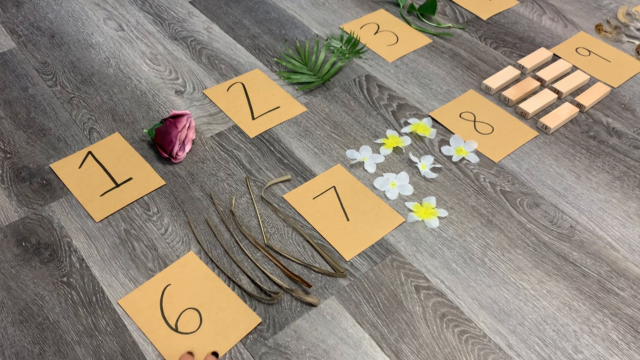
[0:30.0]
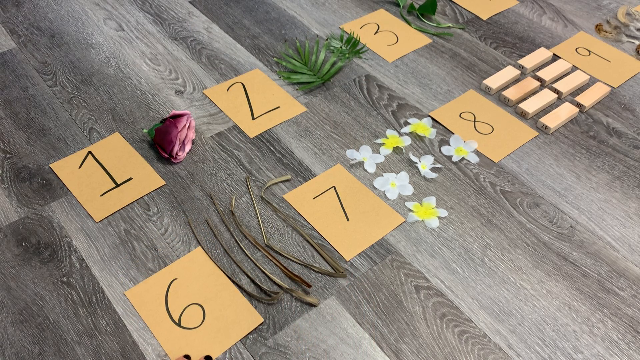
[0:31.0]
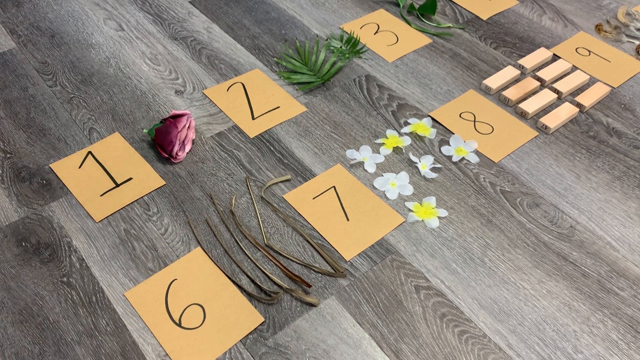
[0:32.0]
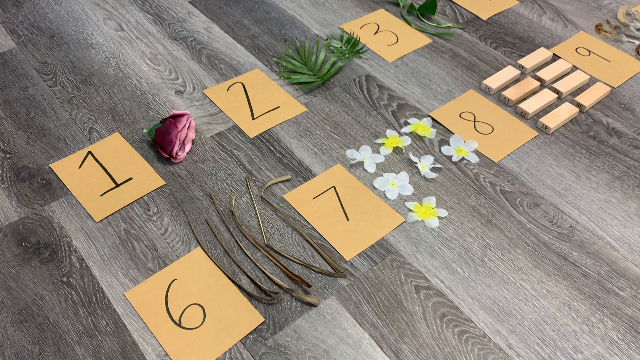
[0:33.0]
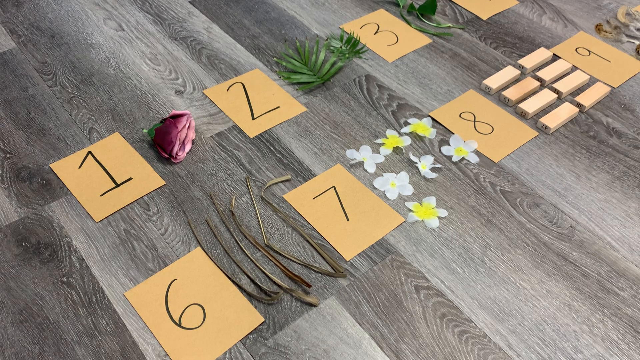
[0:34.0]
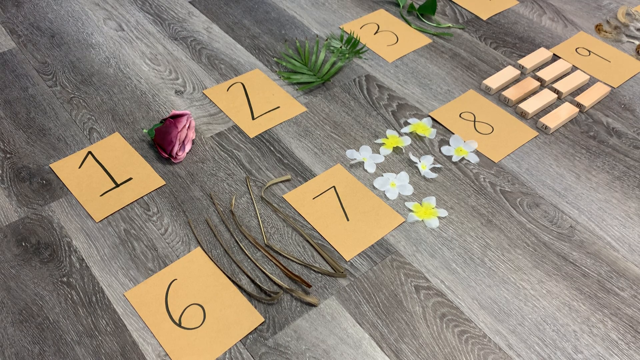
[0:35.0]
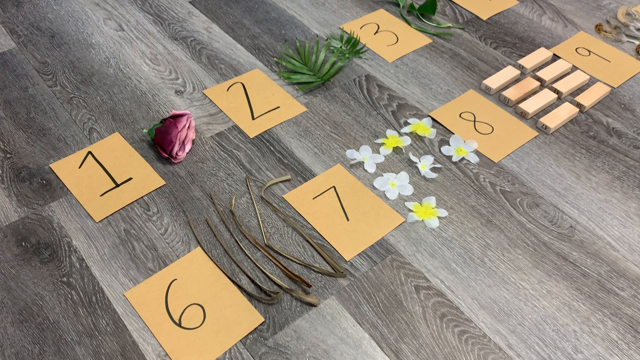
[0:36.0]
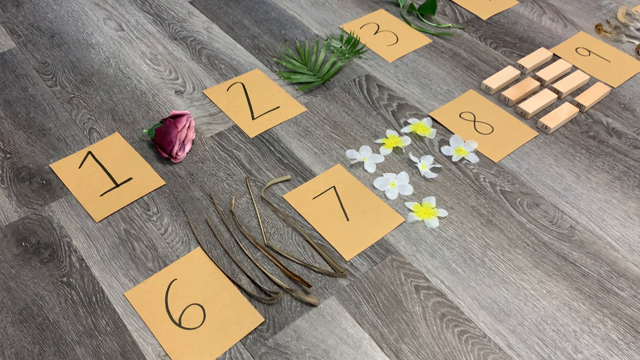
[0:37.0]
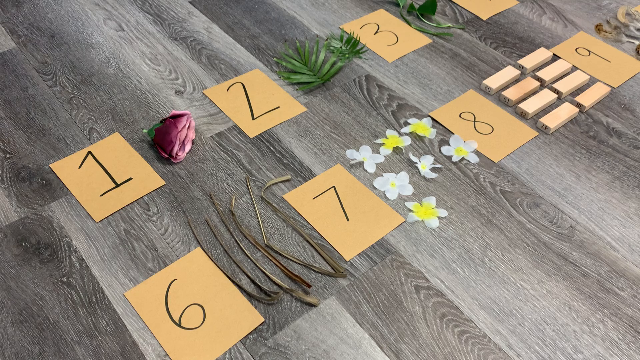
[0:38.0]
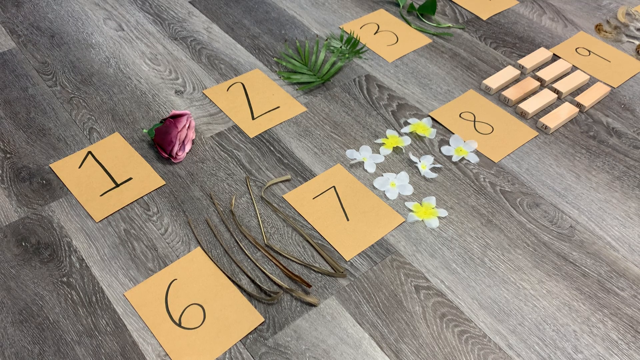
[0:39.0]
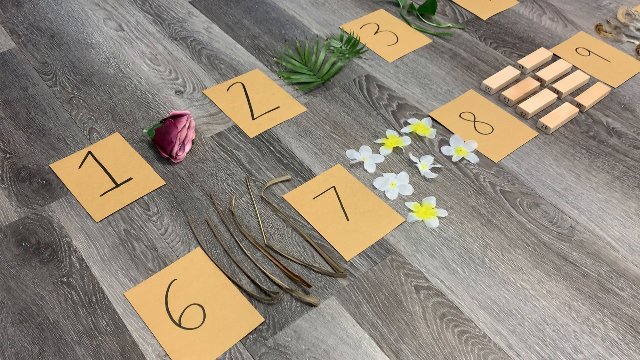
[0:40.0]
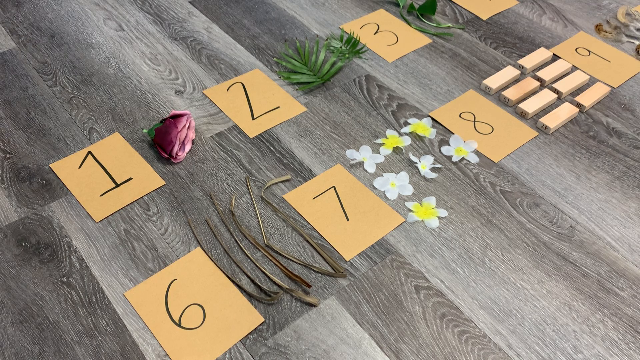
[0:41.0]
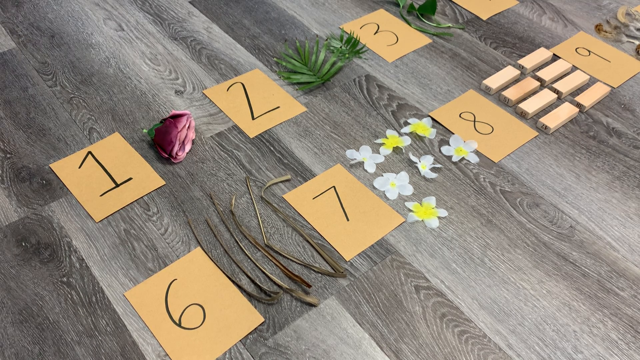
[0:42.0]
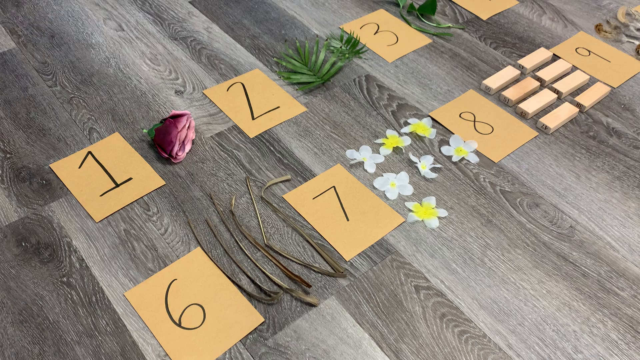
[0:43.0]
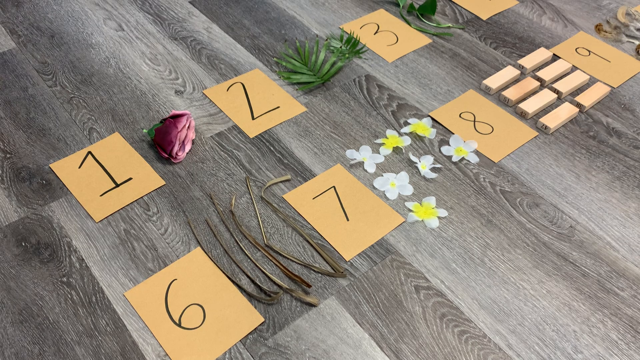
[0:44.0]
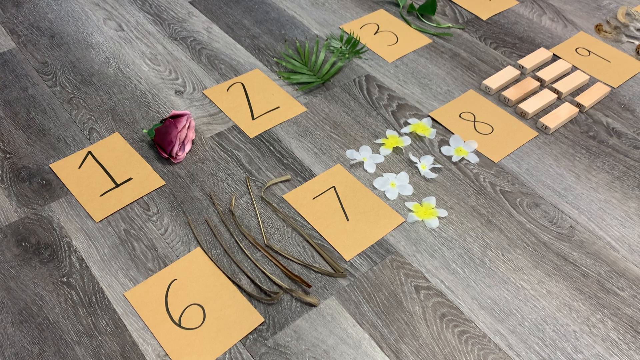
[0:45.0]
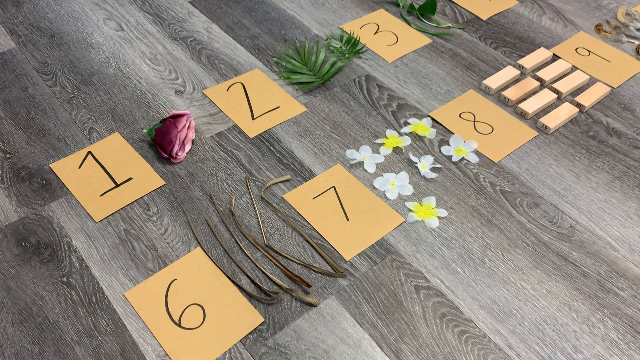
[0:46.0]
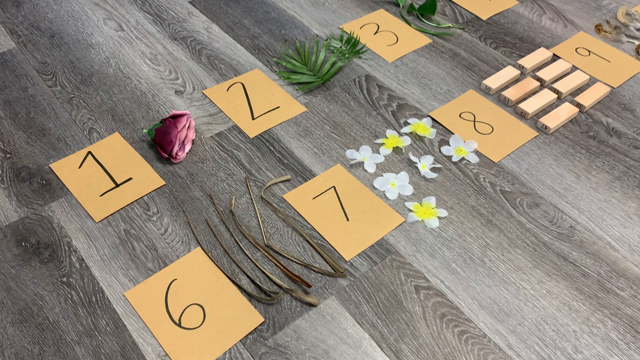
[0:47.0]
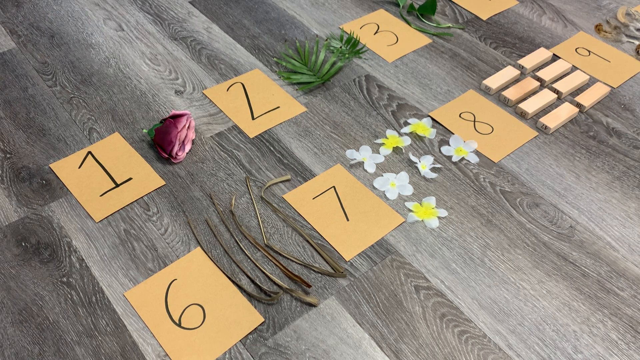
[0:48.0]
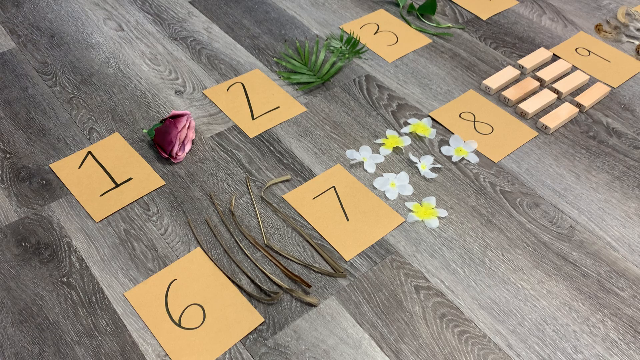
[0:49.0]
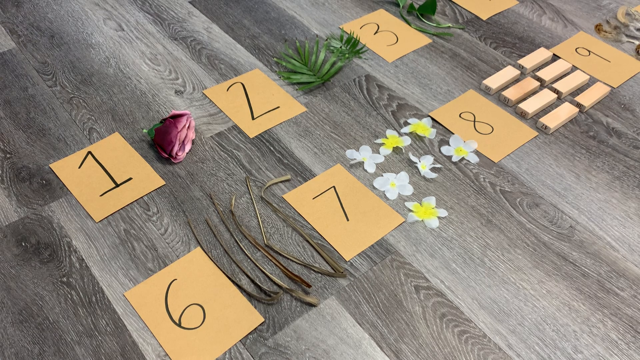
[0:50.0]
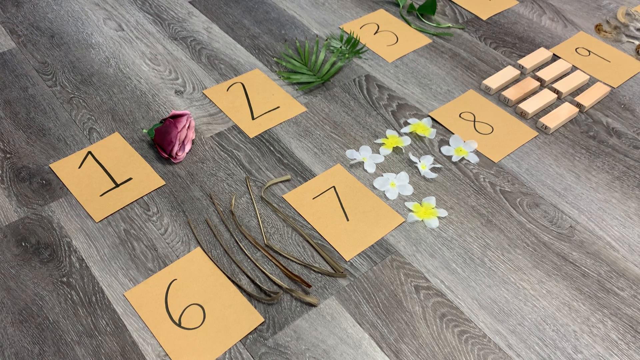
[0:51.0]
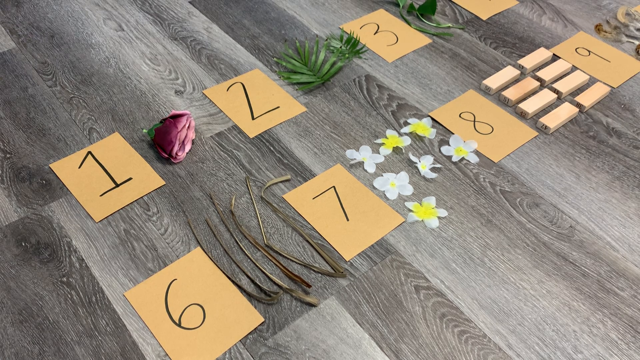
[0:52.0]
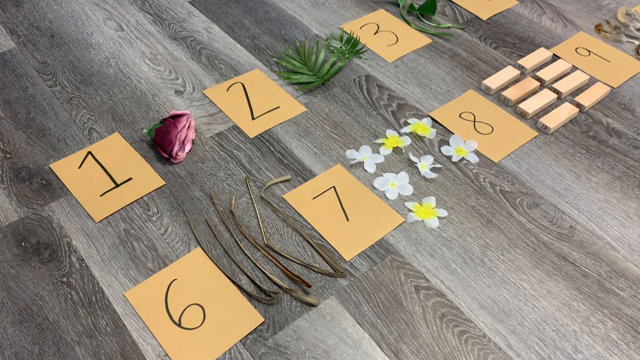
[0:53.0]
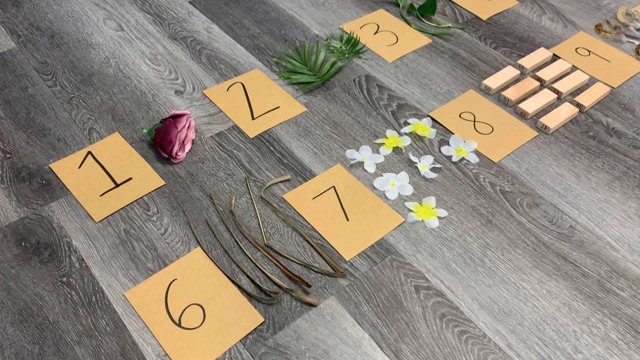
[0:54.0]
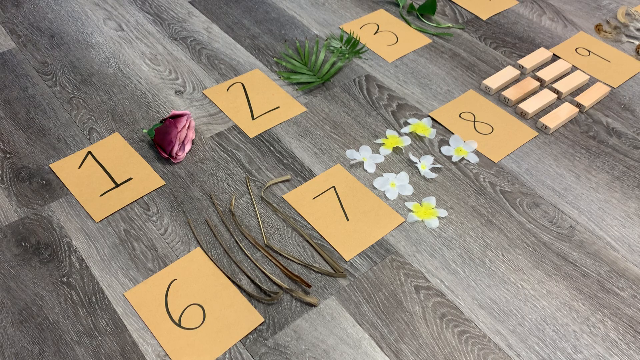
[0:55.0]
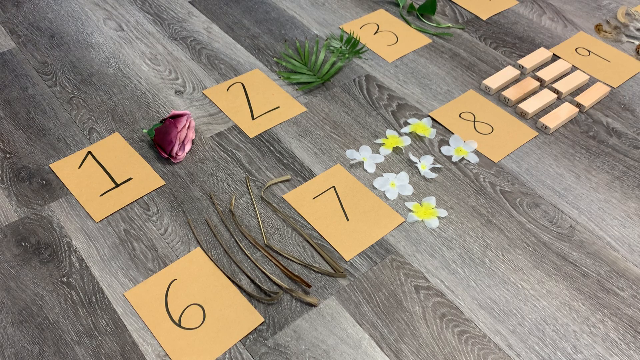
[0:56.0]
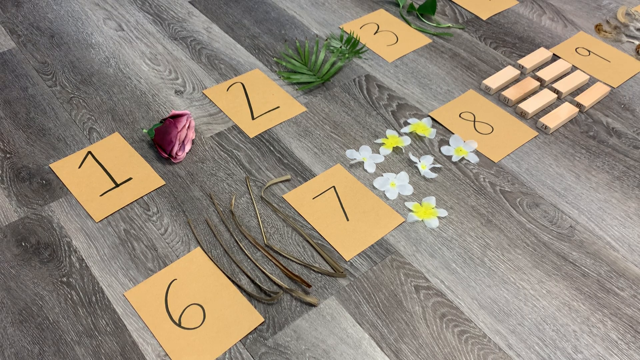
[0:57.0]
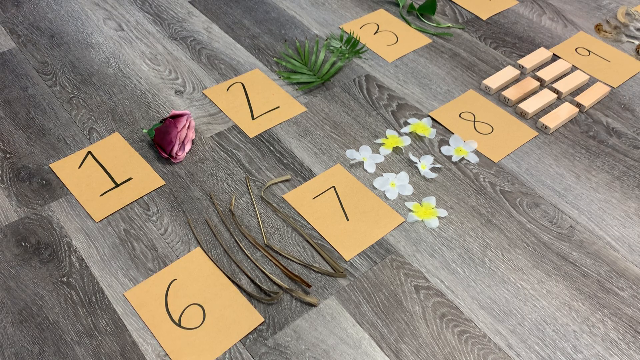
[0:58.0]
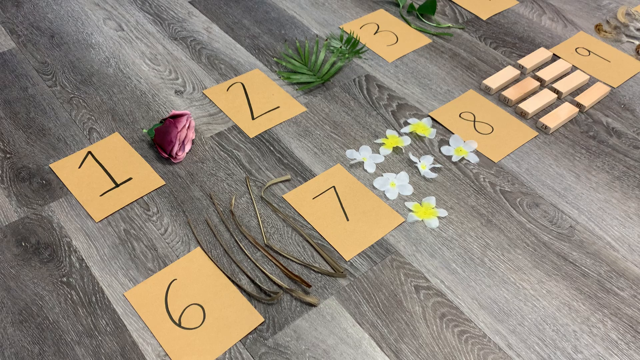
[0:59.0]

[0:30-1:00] A human hand returns briefly and pushes card 6 slightly towards the objects, then disappears, and the scene stays still for most of the time. Right at the end, the hand reaches out and briefly touches the dusky pink flower next to card 1; little detail of the hand can be seen. No other items are touched or moved. The camera stays at the same angle and does not move, and only cards 1 to 3 and 6 to 9 are visible.